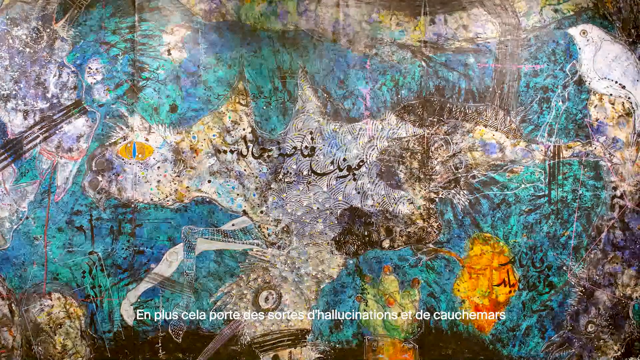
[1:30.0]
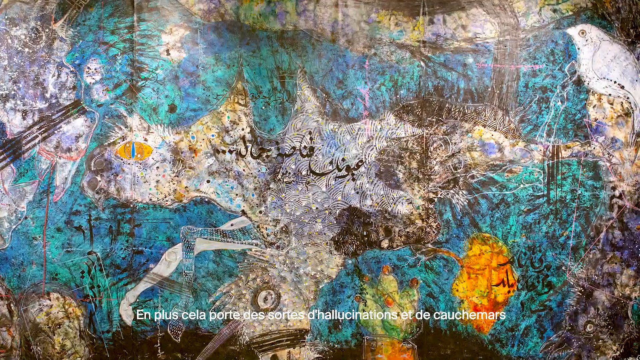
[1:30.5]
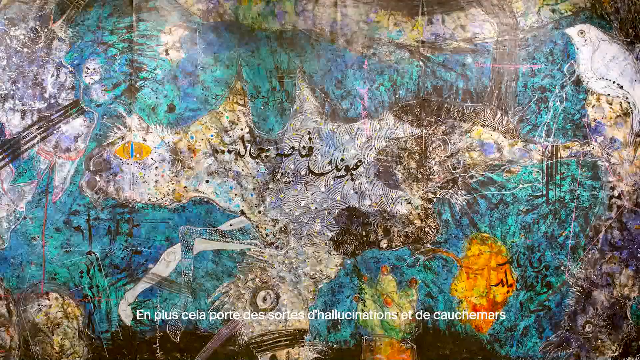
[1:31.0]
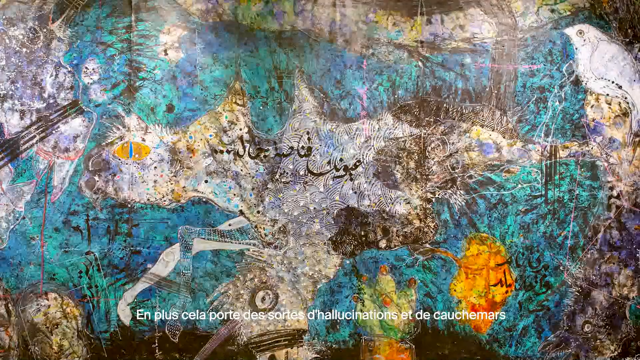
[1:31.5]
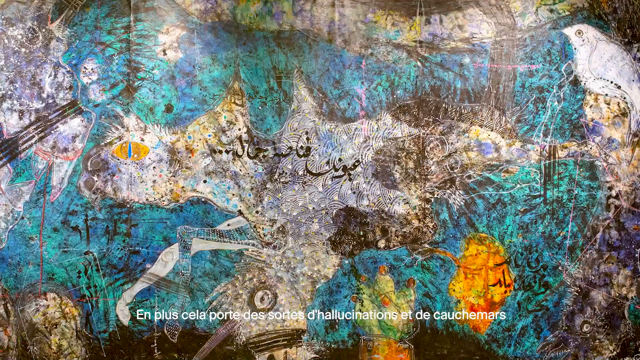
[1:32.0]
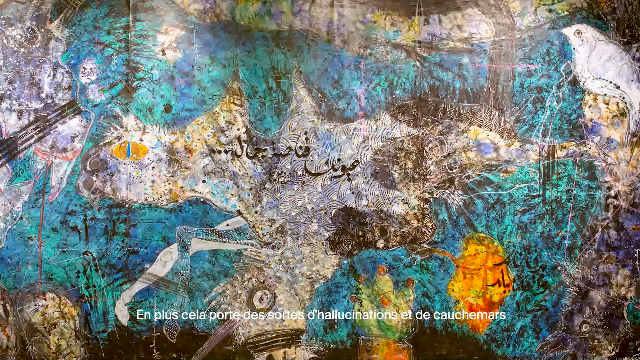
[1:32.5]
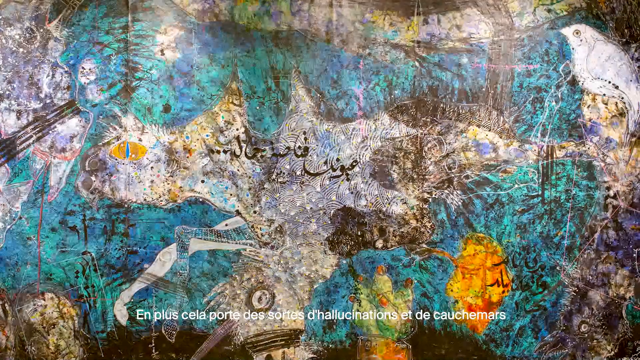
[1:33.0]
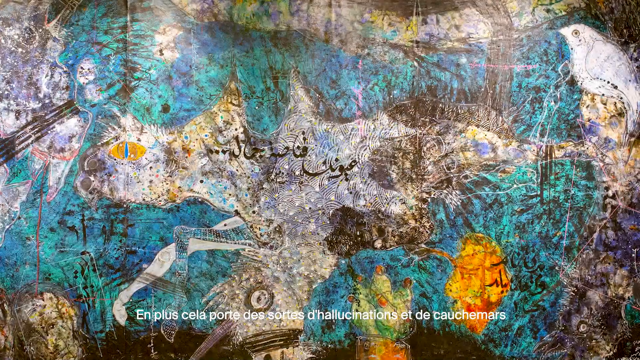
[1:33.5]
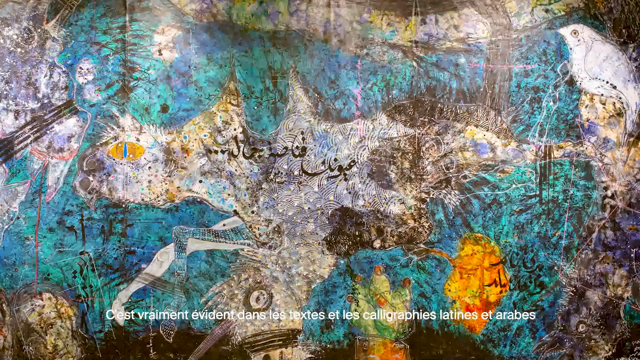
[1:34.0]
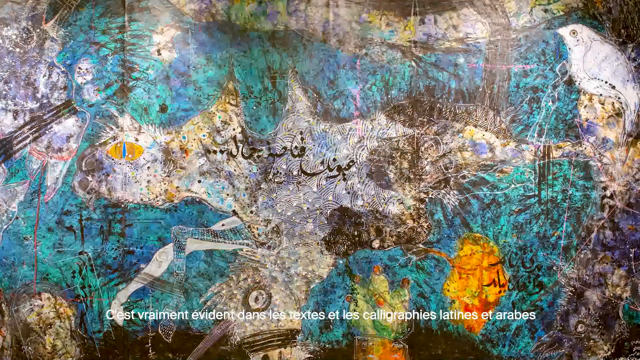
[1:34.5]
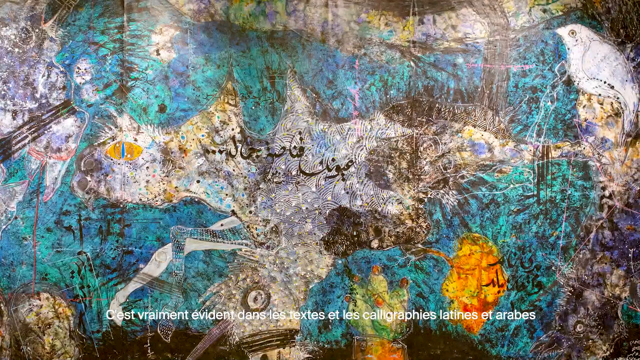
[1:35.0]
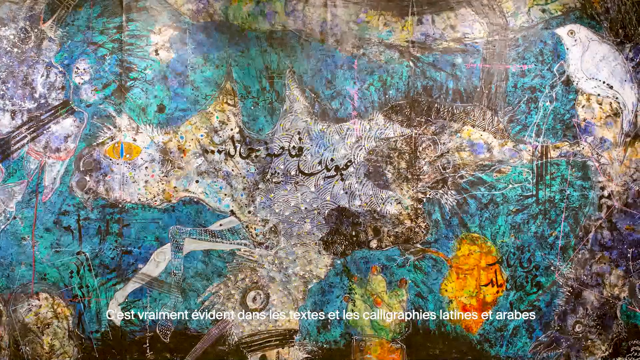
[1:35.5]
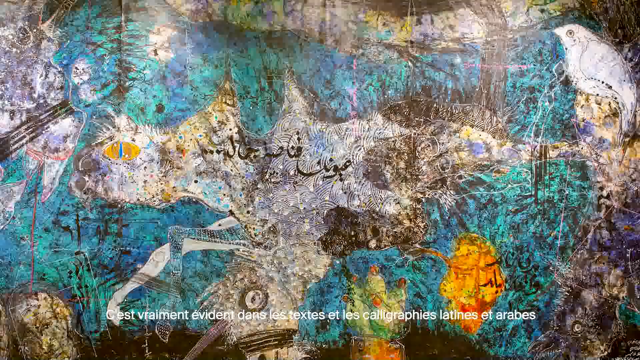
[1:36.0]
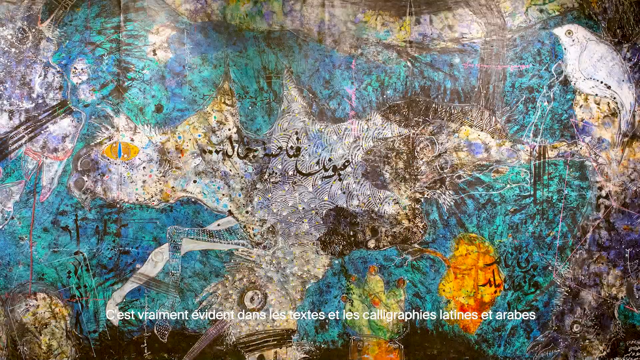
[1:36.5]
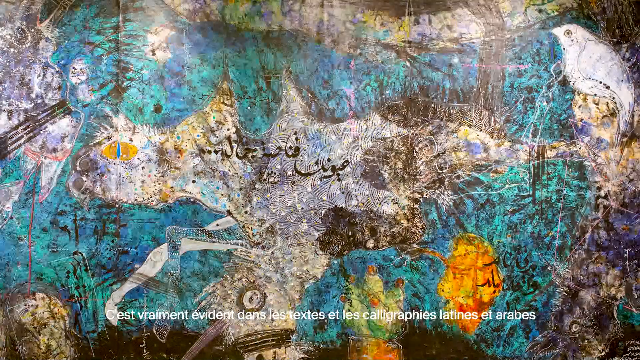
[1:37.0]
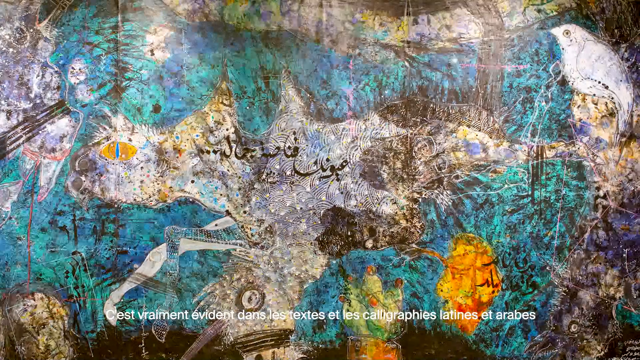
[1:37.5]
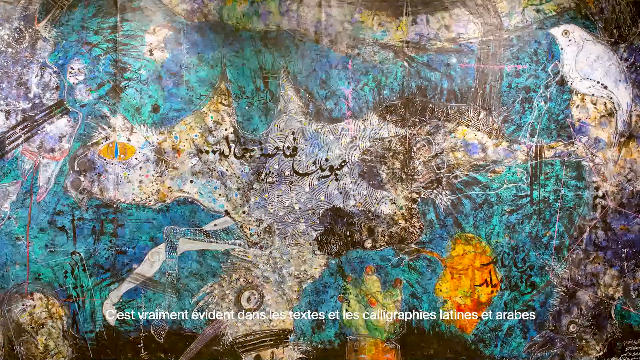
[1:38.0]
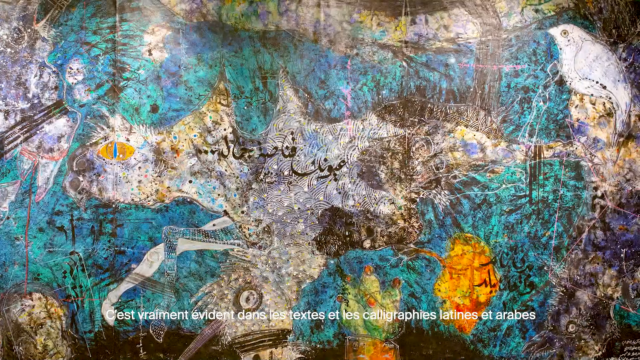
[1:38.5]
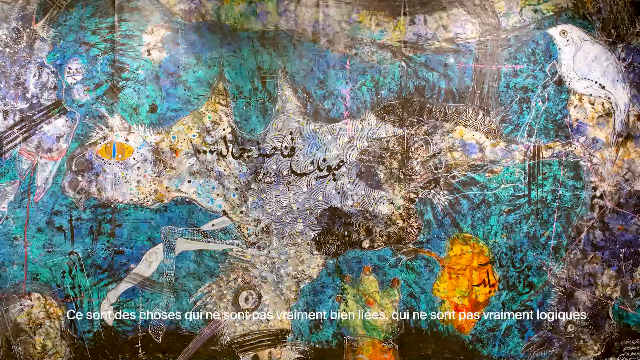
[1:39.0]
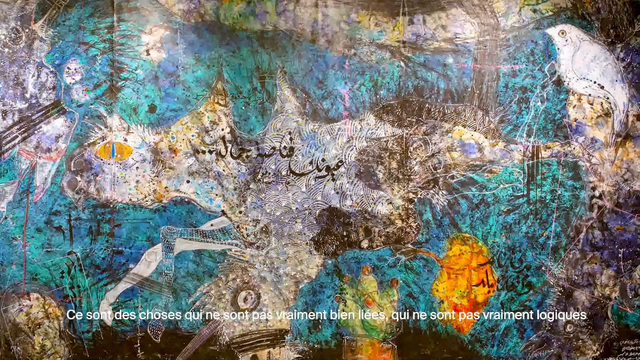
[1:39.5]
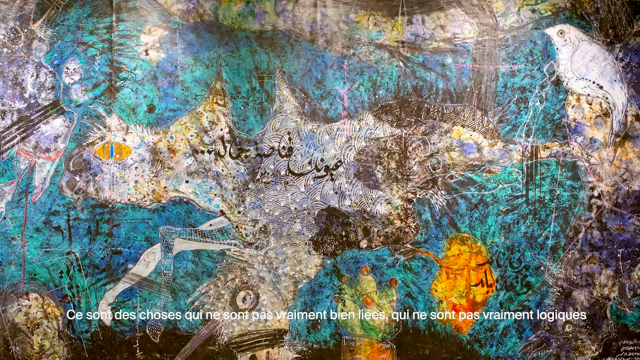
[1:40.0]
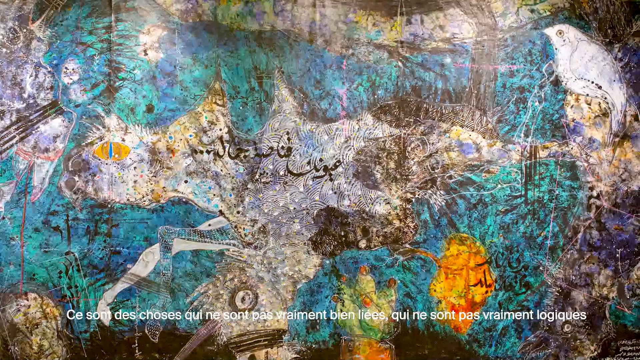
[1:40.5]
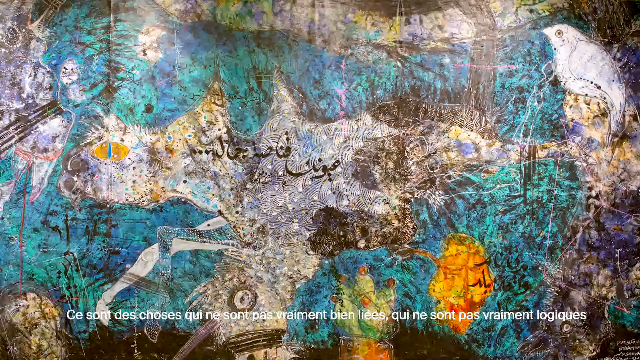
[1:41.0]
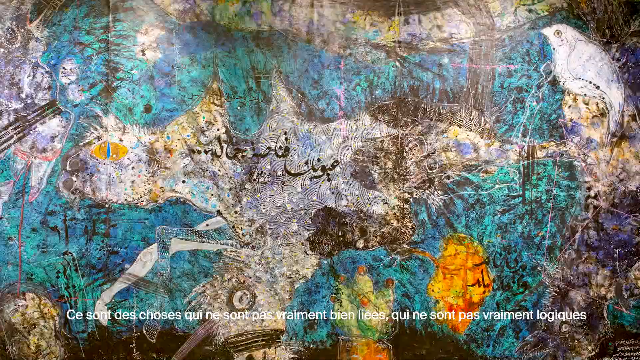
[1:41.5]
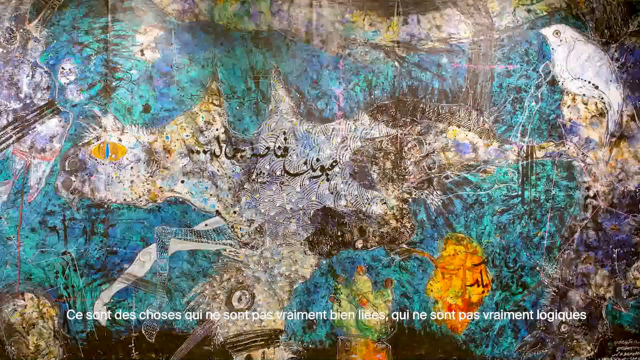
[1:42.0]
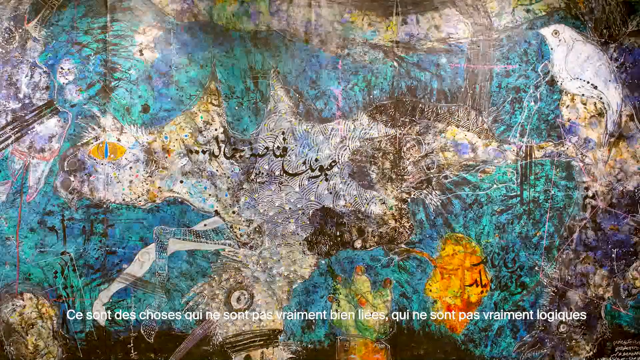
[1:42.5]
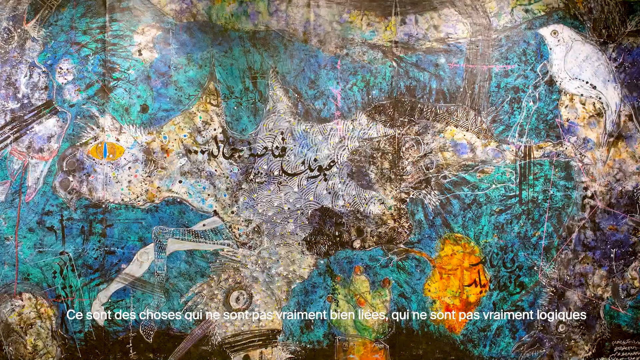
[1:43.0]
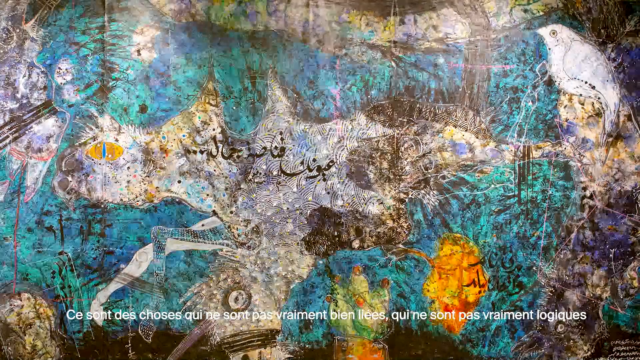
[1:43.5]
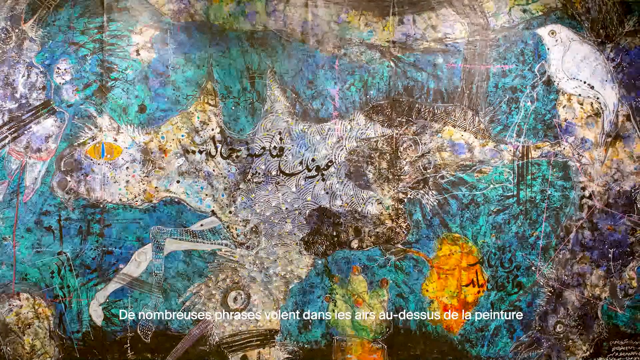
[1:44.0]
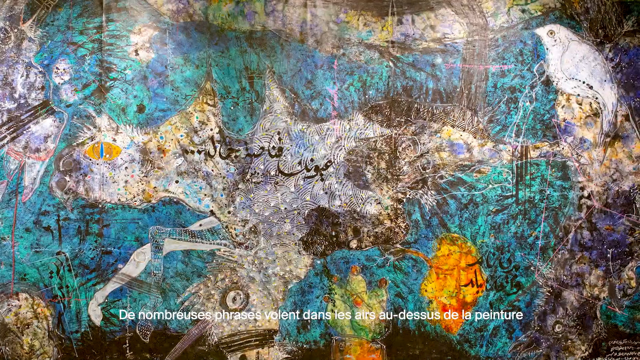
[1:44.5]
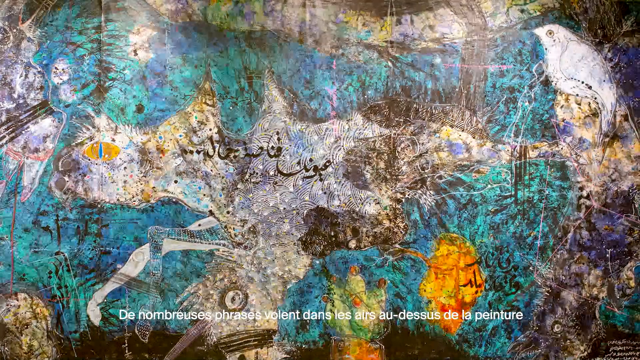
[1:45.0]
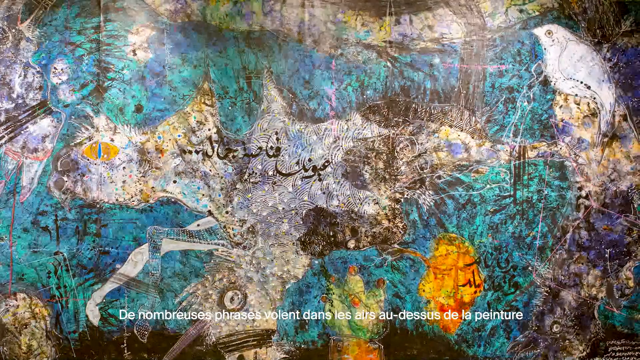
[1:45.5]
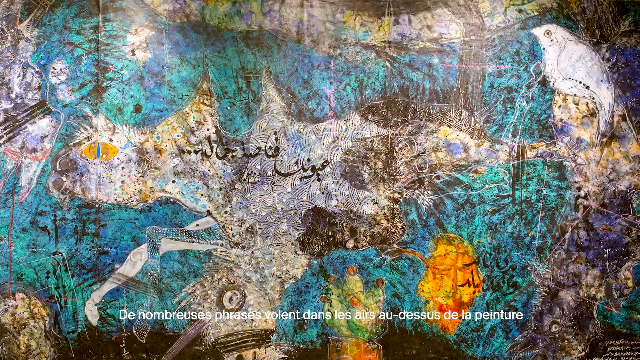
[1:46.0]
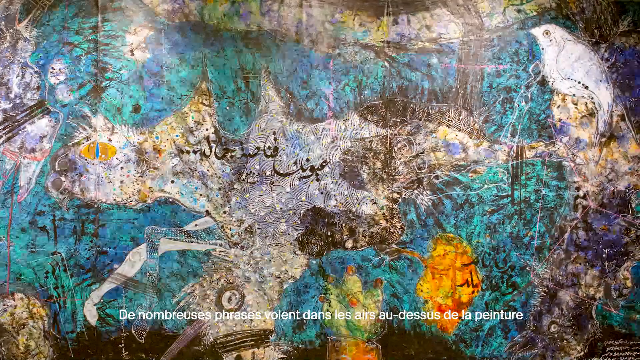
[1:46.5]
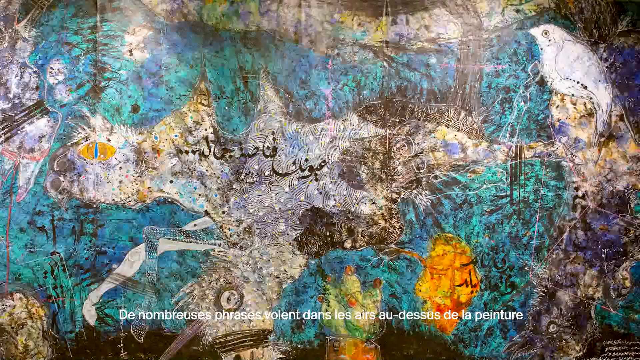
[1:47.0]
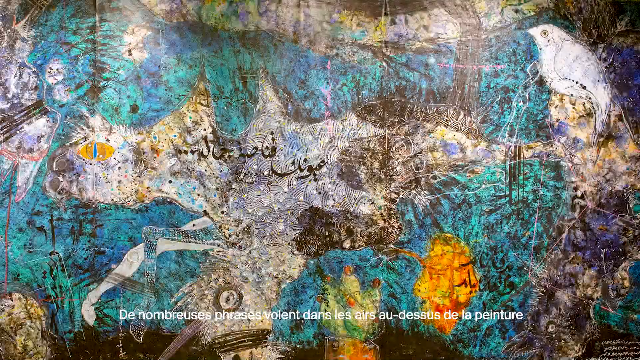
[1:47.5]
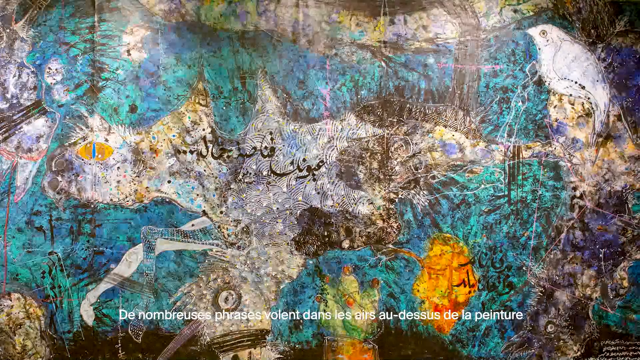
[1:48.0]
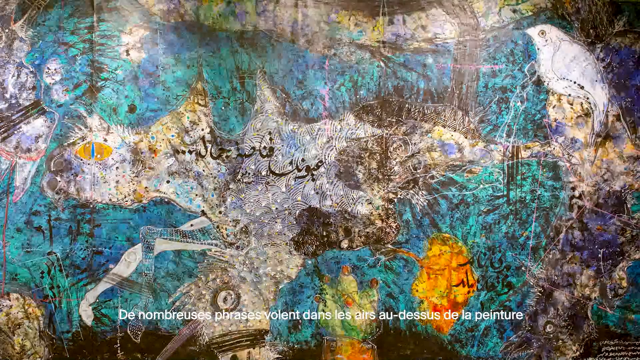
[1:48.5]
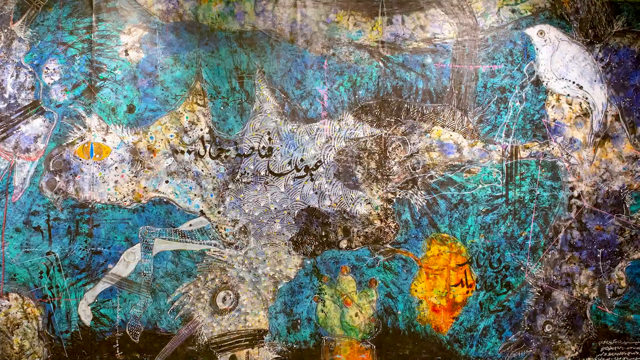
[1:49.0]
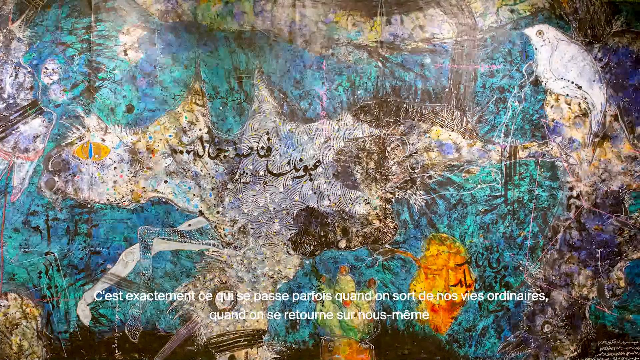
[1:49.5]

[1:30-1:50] The view seems zoomed out on an image or painting that looks like it shows a bird-like, cat-type being. Brushstrokes are visible. It looks like a very large painting, covering a whole area. A white bird, something in orange and something in green are visible. The picture and setting stay the same while white subtitles in a different language appear at the bottom as the camera moves around the painting.